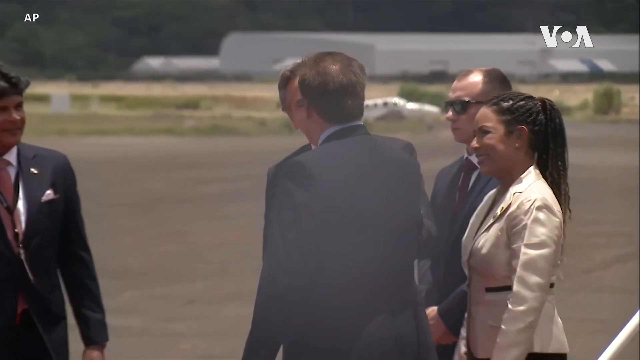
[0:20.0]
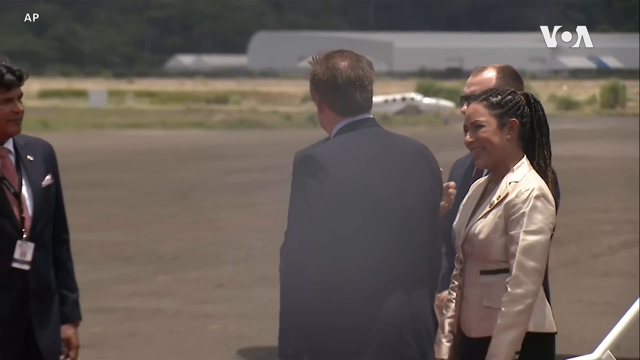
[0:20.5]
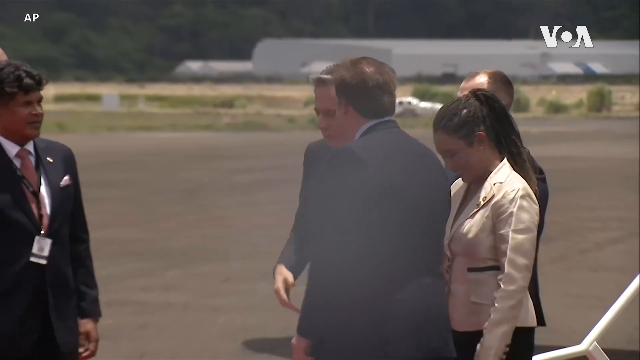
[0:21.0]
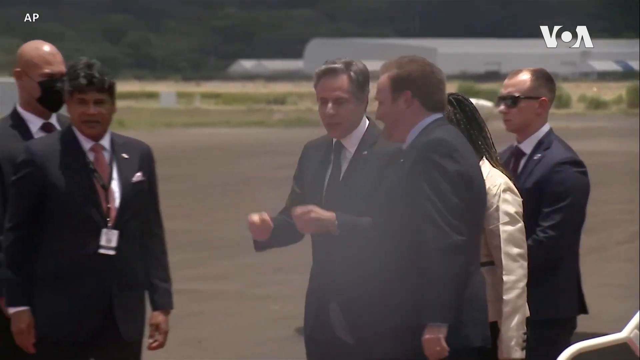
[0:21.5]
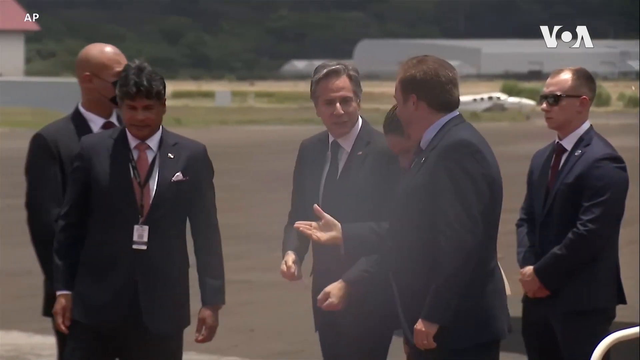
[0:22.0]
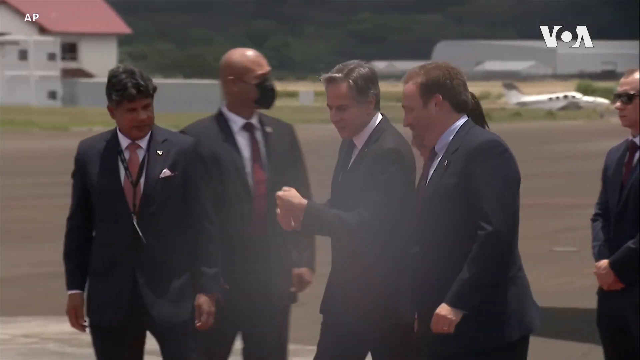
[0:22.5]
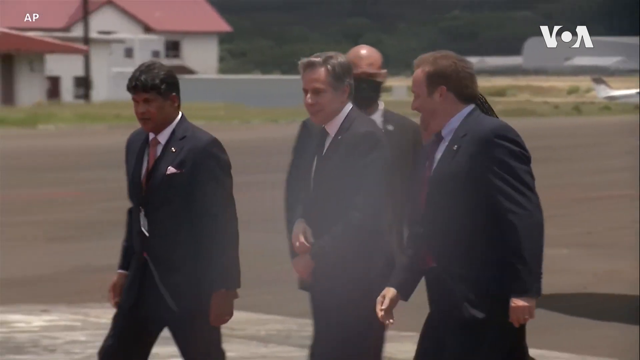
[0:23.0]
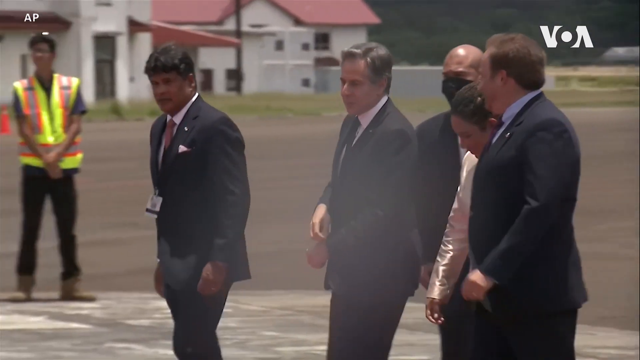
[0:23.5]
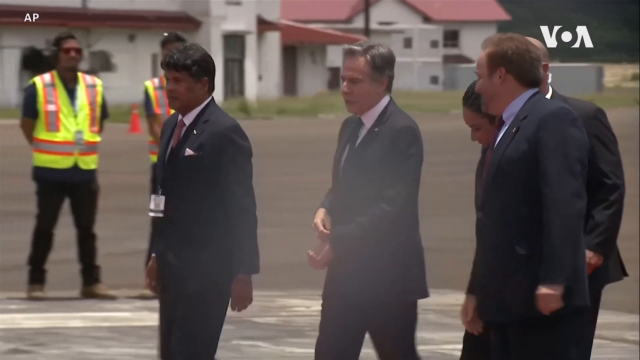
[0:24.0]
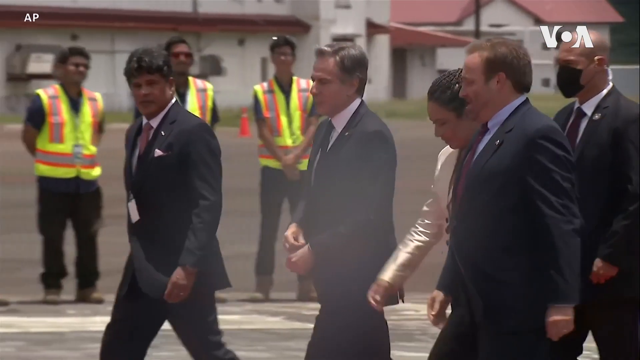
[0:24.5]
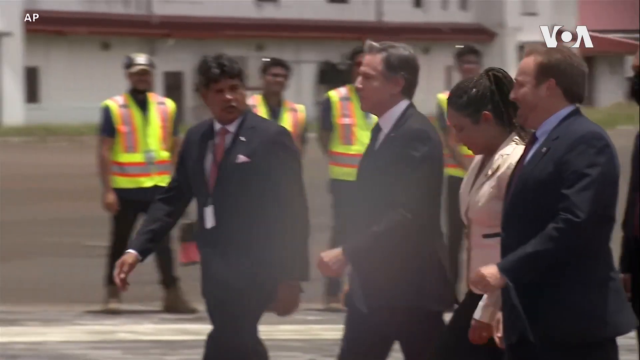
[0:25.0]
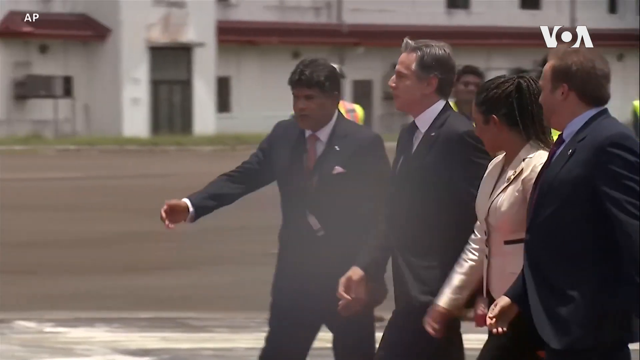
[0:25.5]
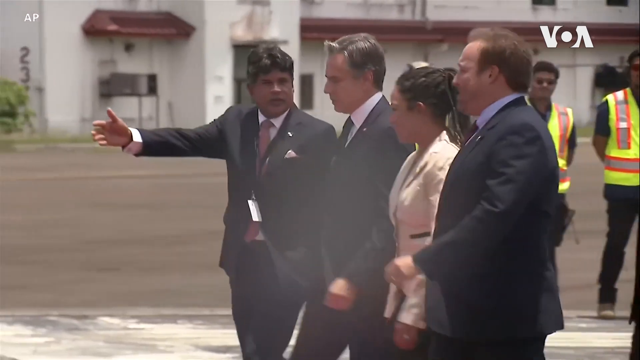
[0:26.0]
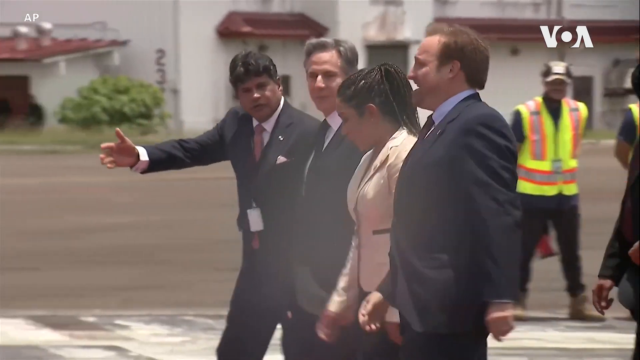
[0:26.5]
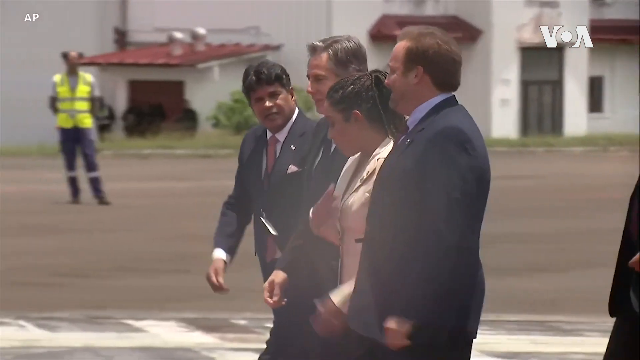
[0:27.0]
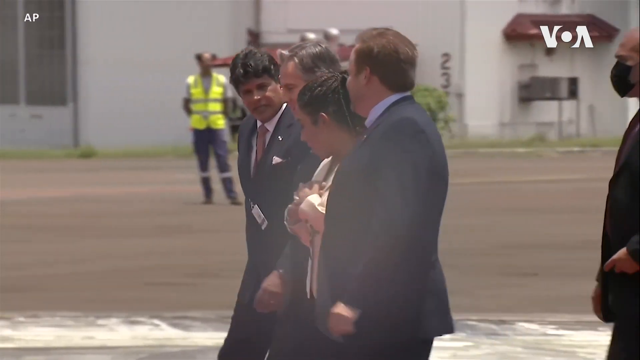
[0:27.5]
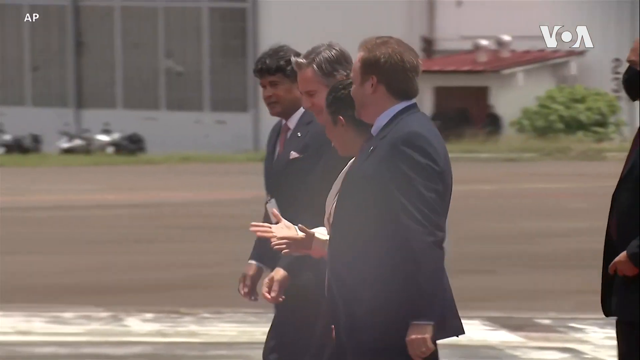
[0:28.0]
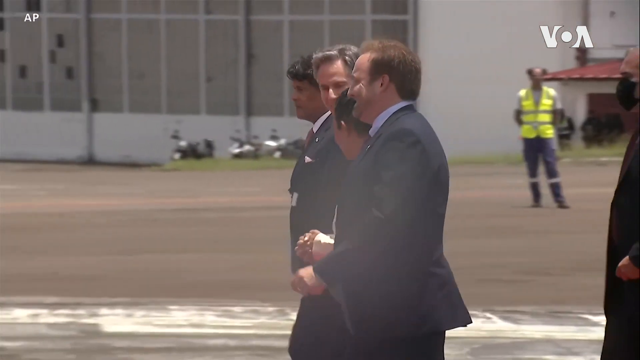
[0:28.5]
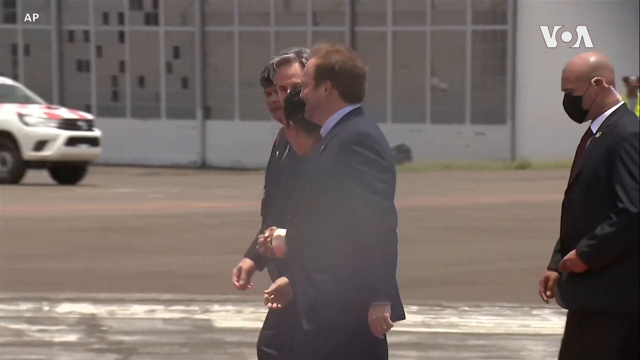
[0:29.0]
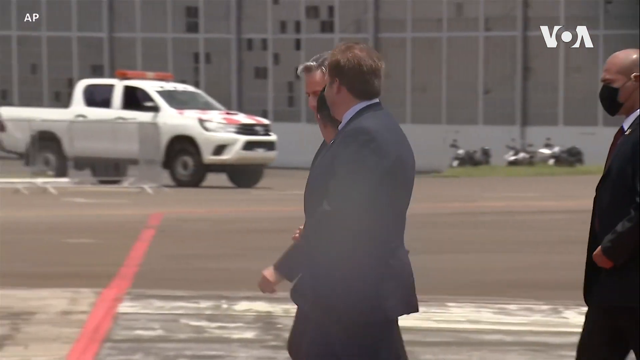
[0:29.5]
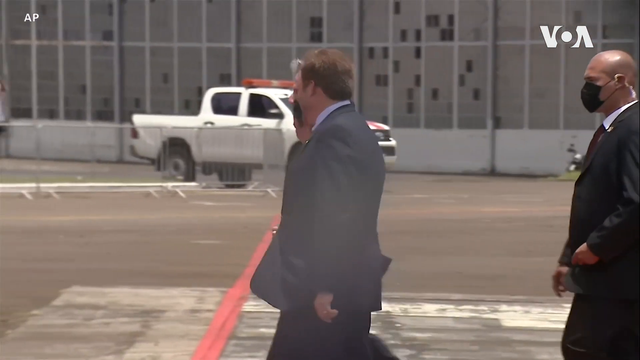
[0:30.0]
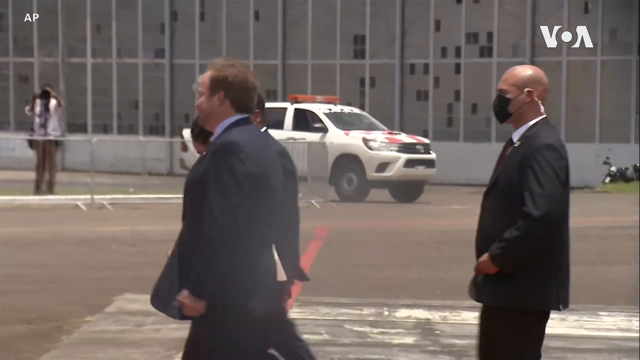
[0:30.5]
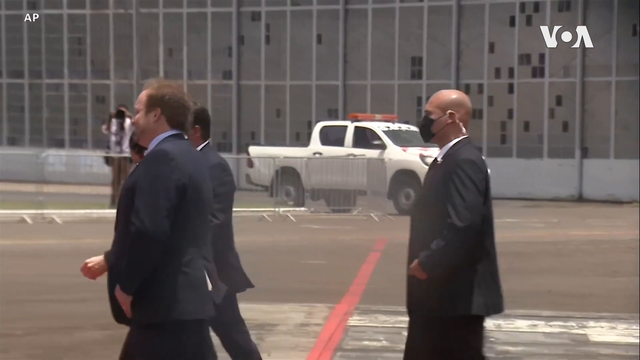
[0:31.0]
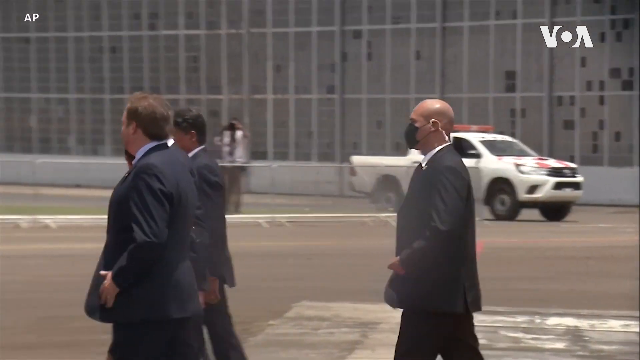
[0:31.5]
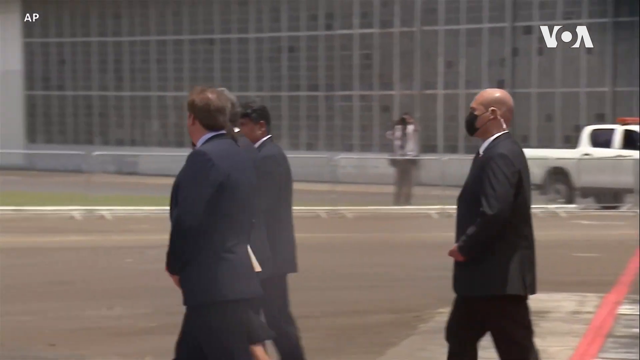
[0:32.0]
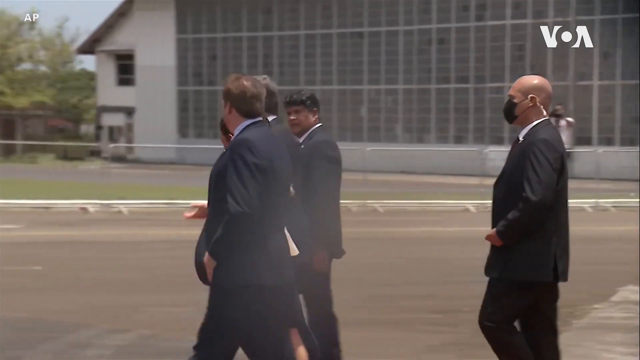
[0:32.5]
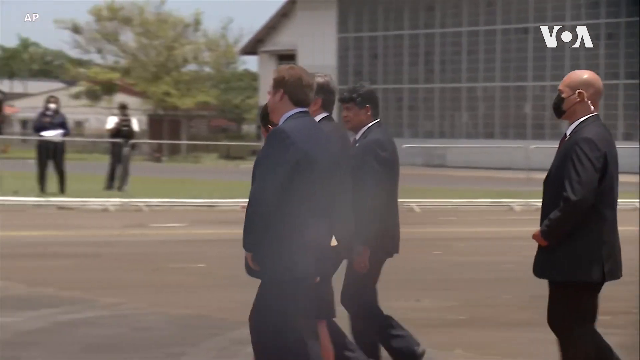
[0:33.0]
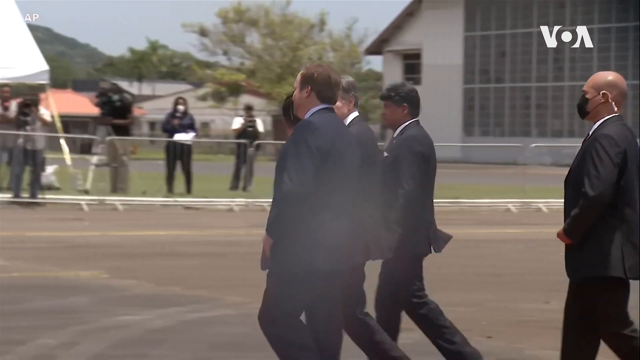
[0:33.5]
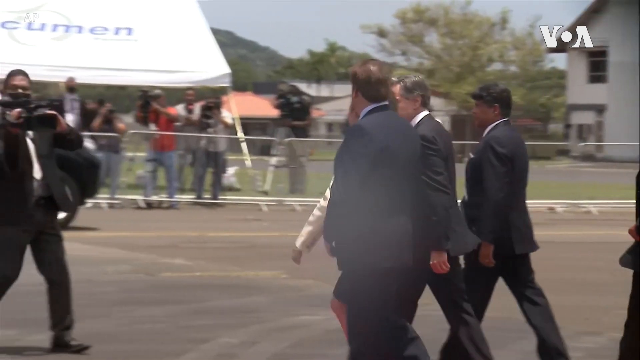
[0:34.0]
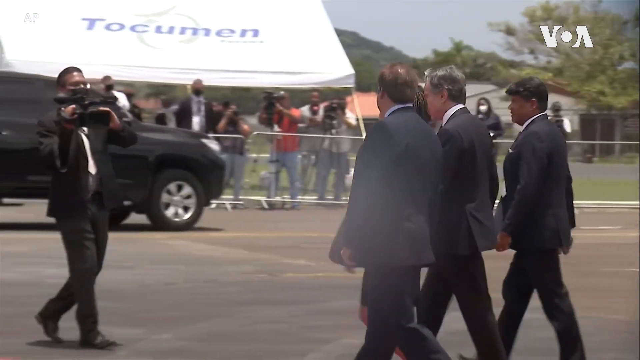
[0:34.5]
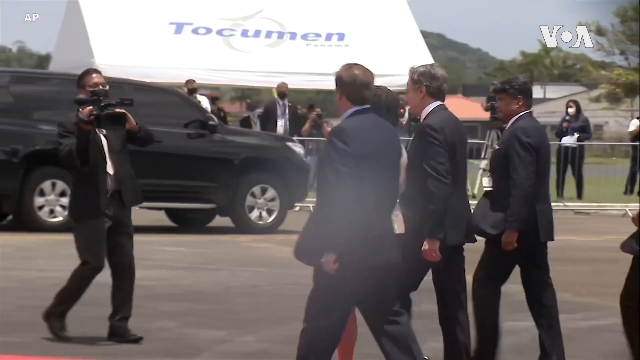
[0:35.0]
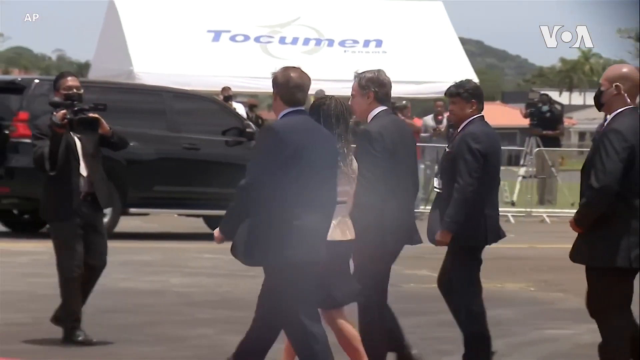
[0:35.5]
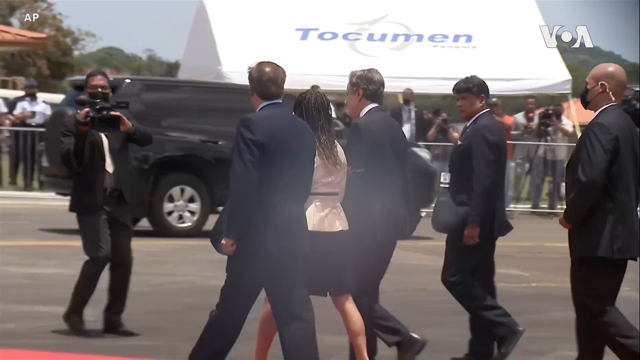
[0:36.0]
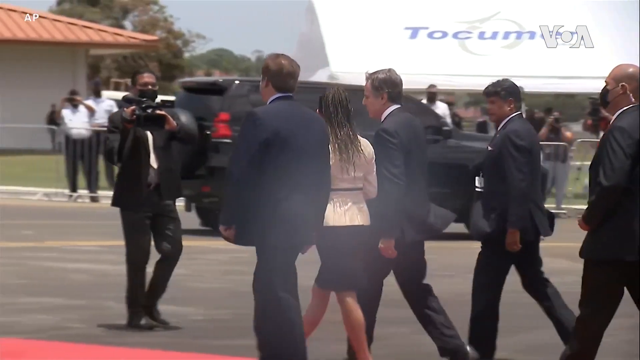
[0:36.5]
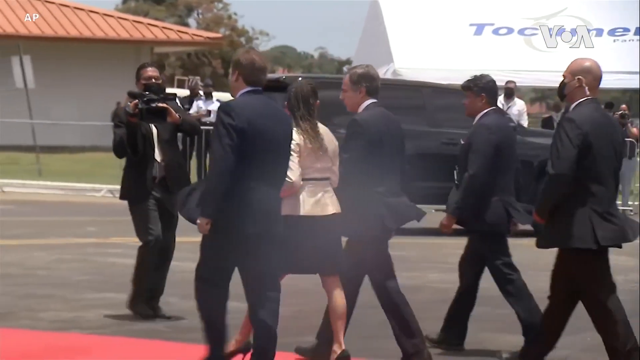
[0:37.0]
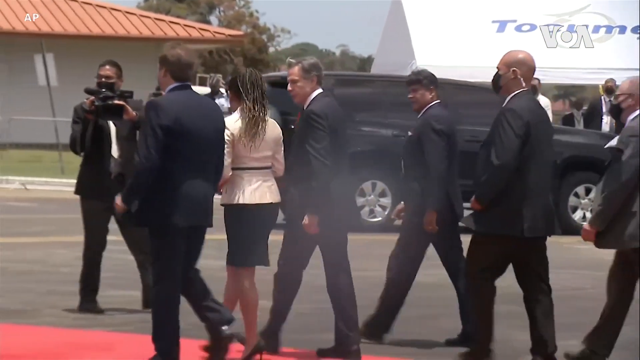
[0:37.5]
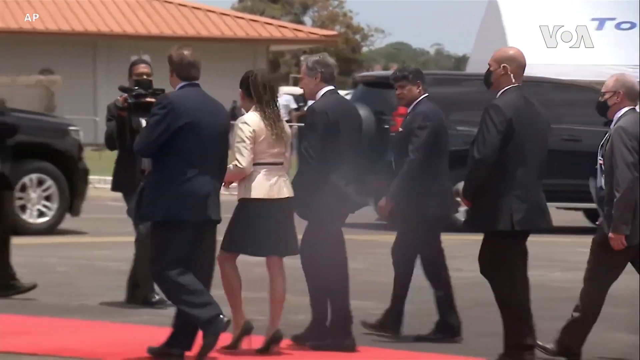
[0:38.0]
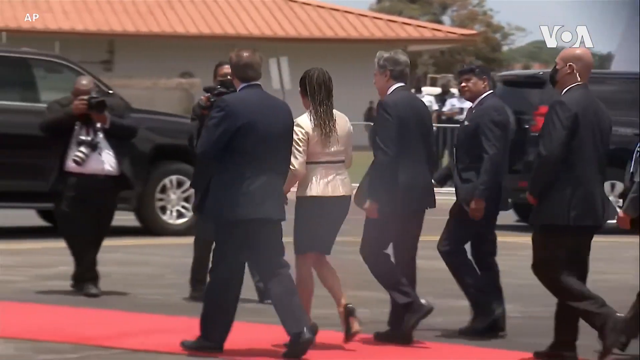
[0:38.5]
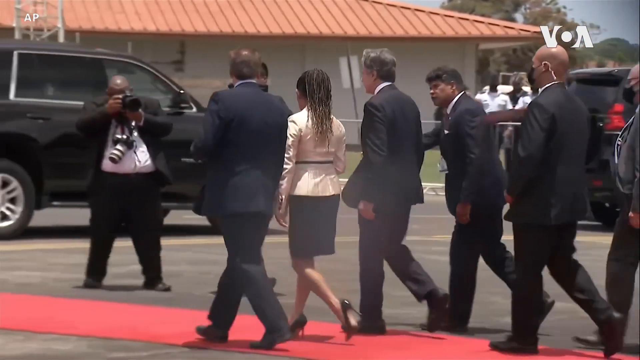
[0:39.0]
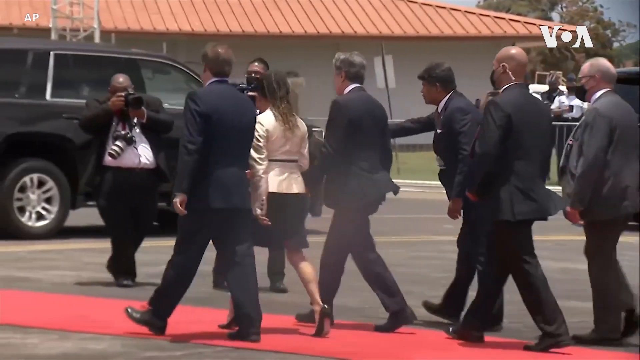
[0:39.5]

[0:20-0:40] The man who got off the plane walks with the African American lady and the last gentleman, who looks like an Indian man escorting him down the runway. A gentleman behind him wears a face mask and looks like security. Some men wearing orange vests appear to be airport workers. There is a cameraman in the background, along with a white truck. Bystanders are behind a gate, and there is a cameraman behind the gate. Another man, seemingly African American, holds a camera and videos the three gentlemen and the lady as they walk down the runway; he wears glasses, a black jacket with a white shirt, a white tie and black pants, and walks backwards while videotaping them. A heavyset gentleman takes pictures with one camera and has another camera around his neck as the group walks down the red carpet.